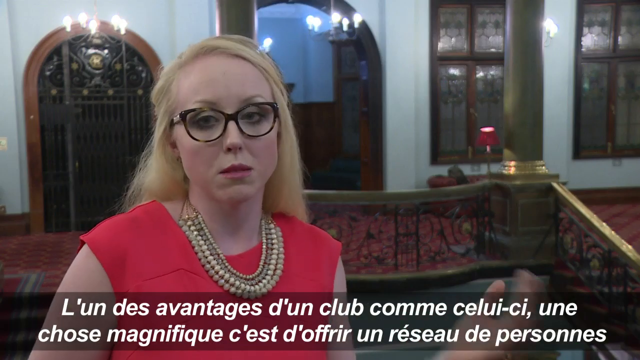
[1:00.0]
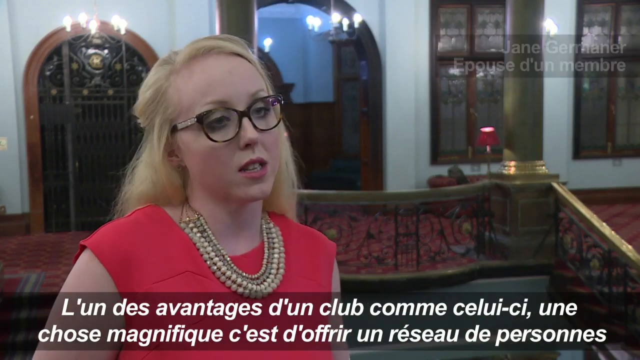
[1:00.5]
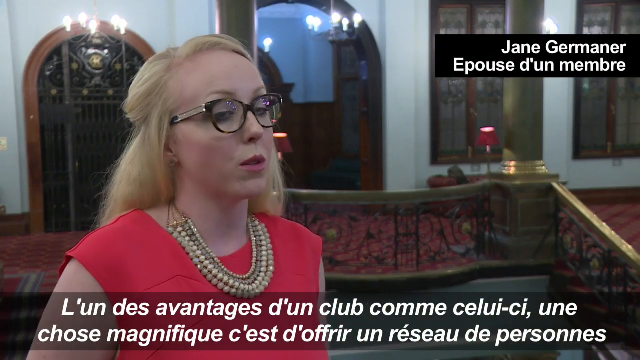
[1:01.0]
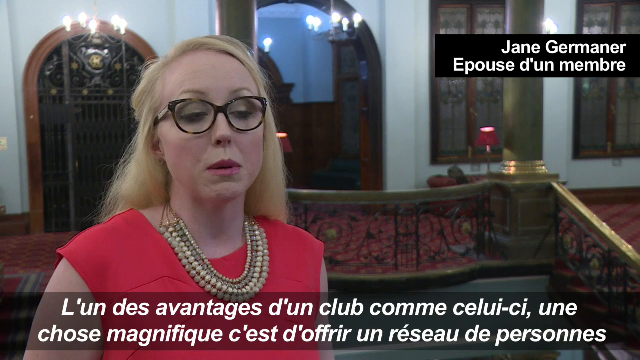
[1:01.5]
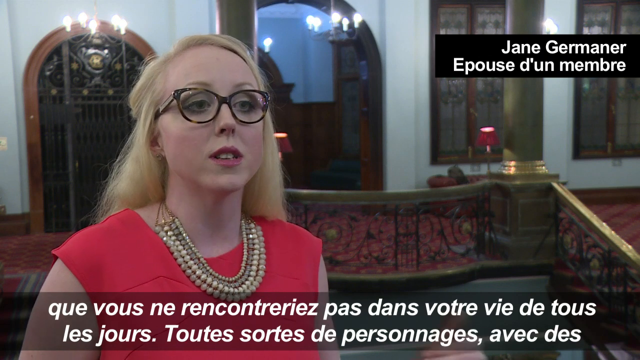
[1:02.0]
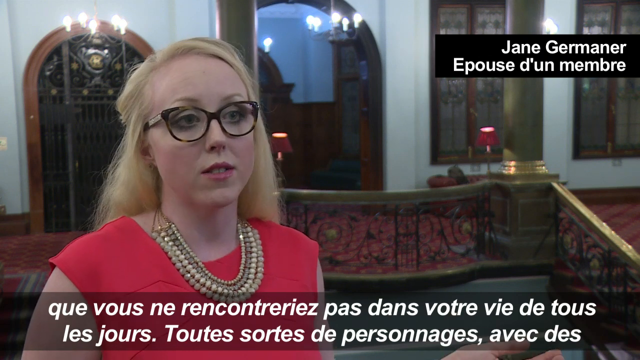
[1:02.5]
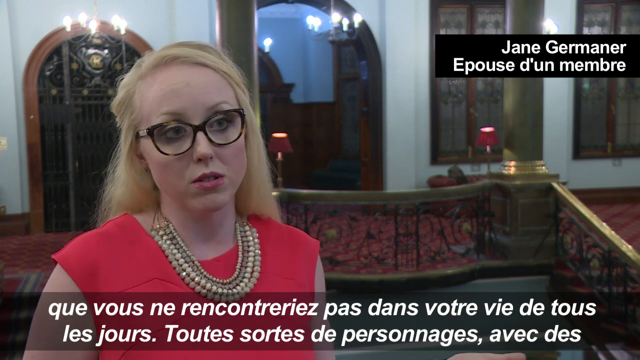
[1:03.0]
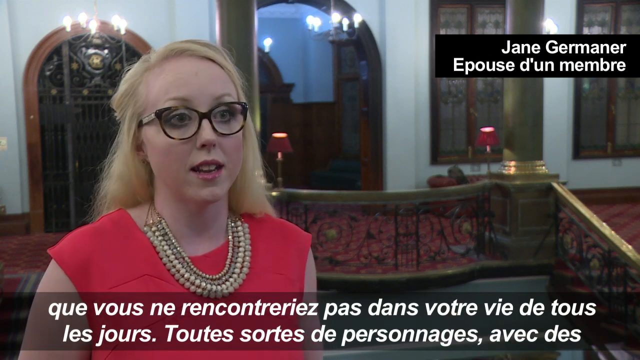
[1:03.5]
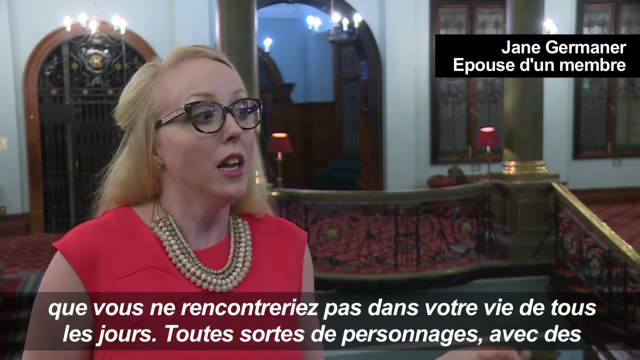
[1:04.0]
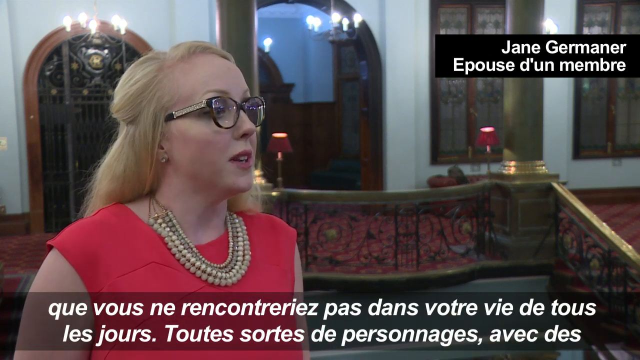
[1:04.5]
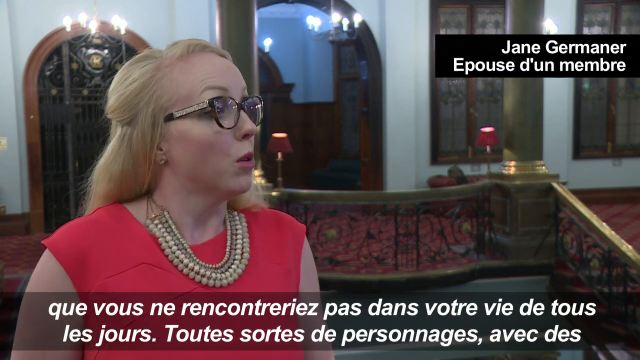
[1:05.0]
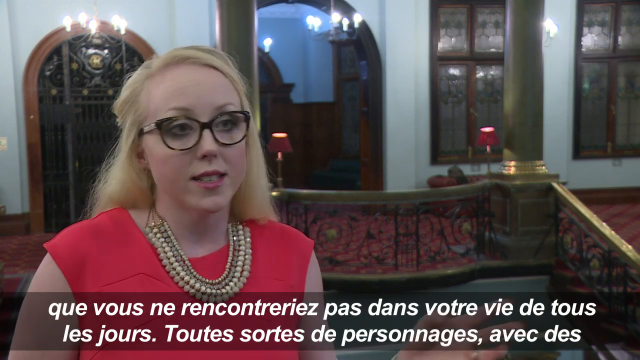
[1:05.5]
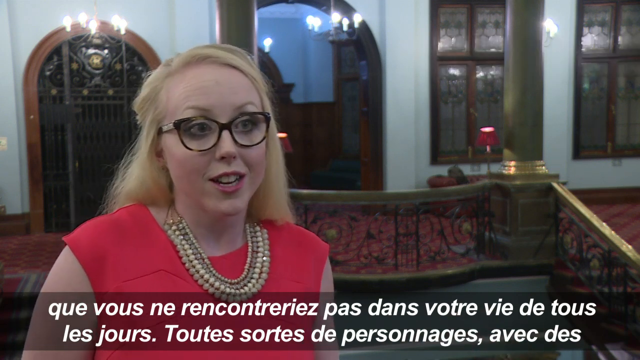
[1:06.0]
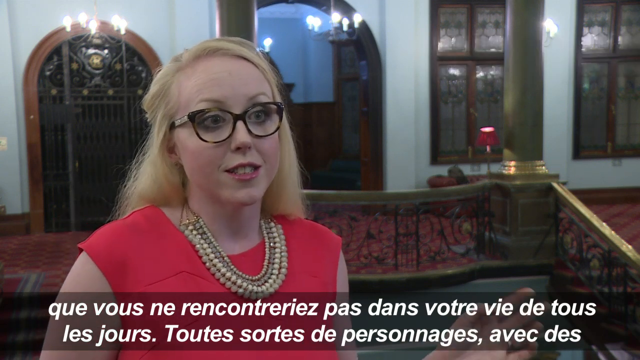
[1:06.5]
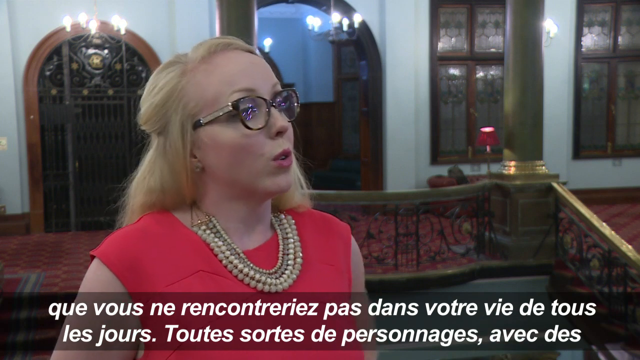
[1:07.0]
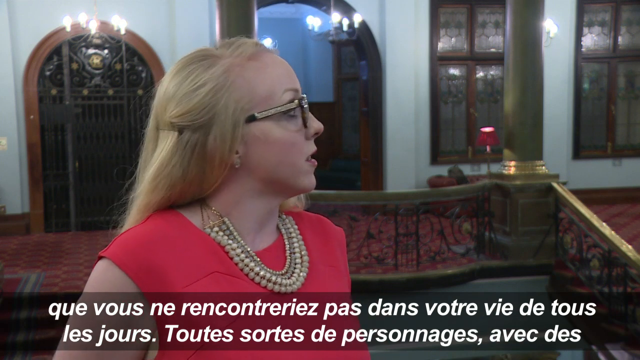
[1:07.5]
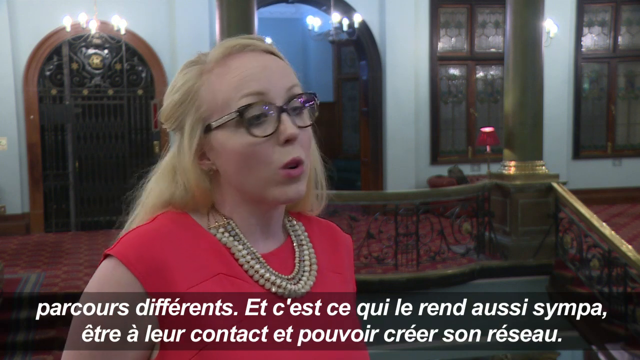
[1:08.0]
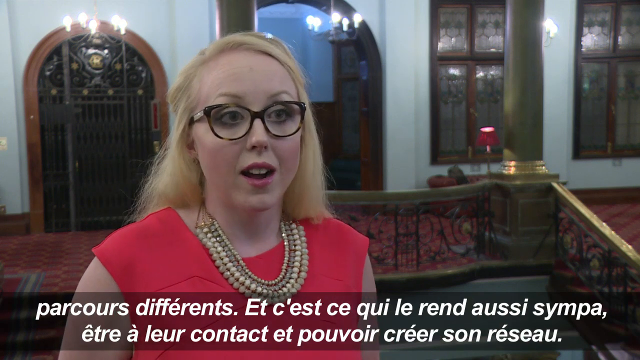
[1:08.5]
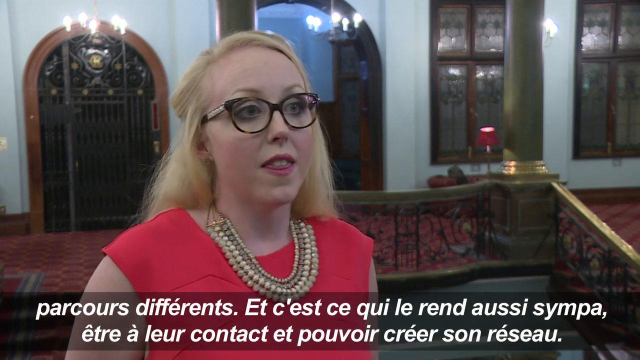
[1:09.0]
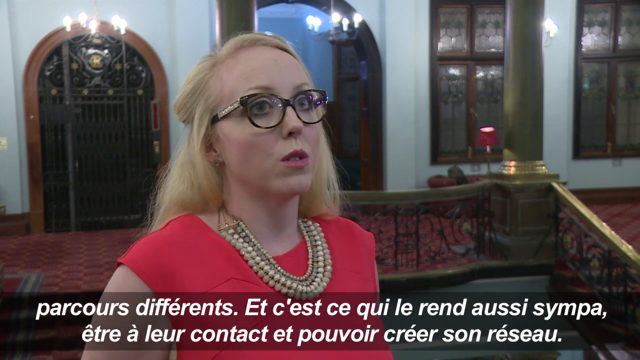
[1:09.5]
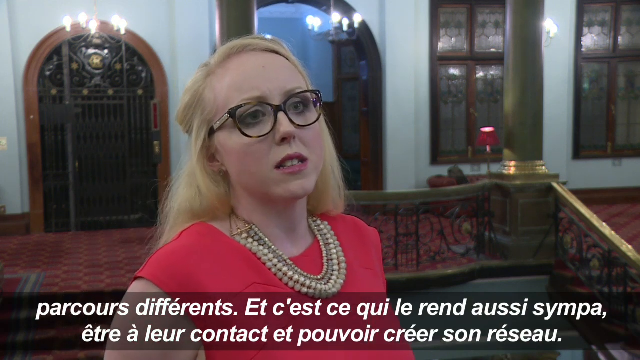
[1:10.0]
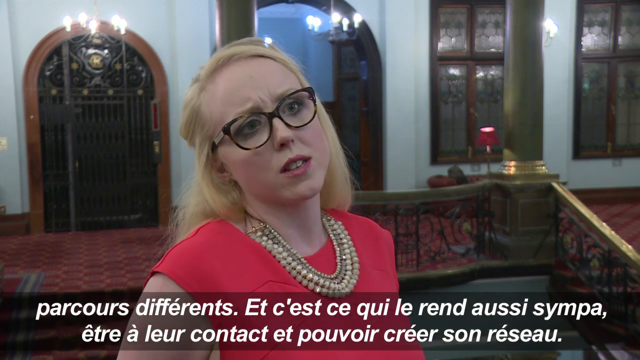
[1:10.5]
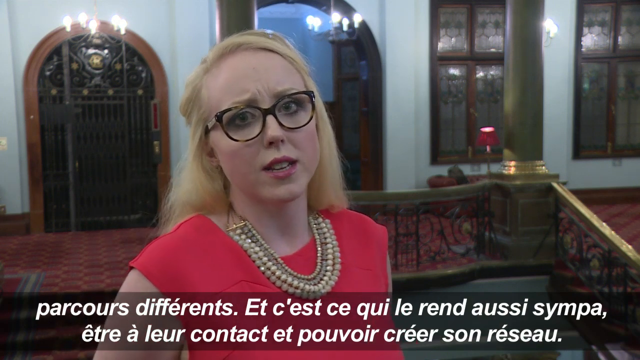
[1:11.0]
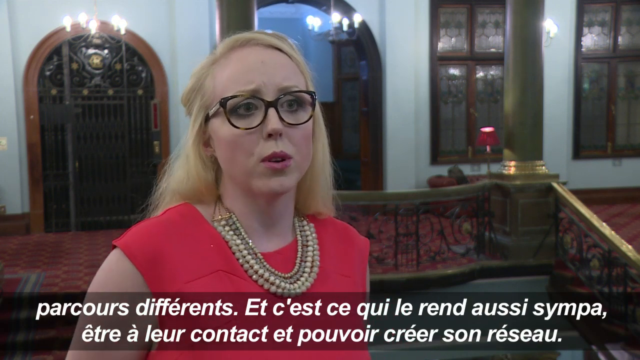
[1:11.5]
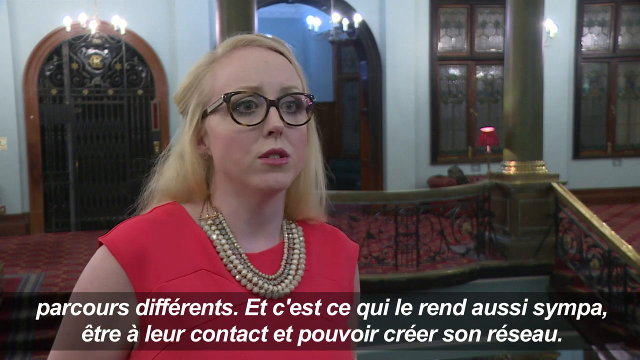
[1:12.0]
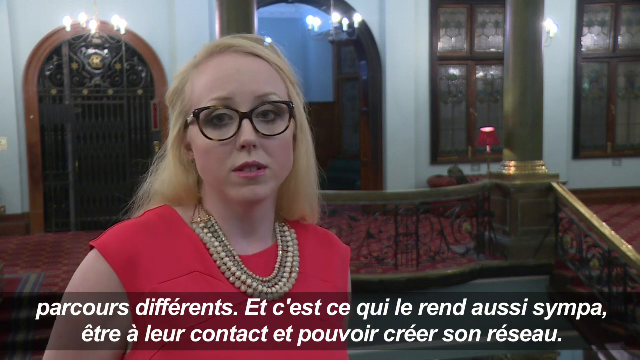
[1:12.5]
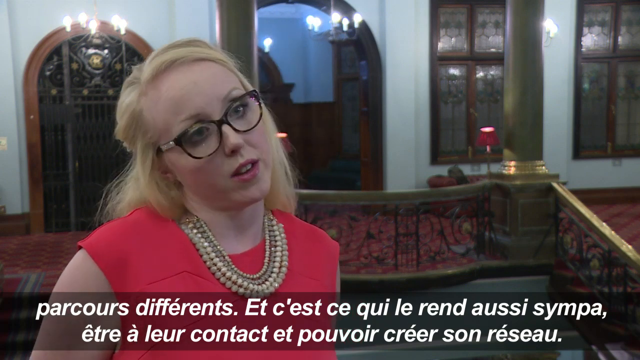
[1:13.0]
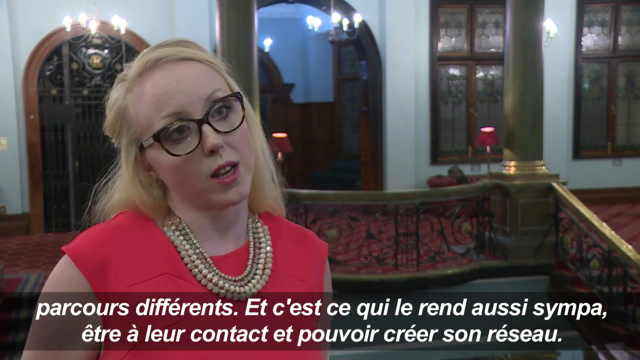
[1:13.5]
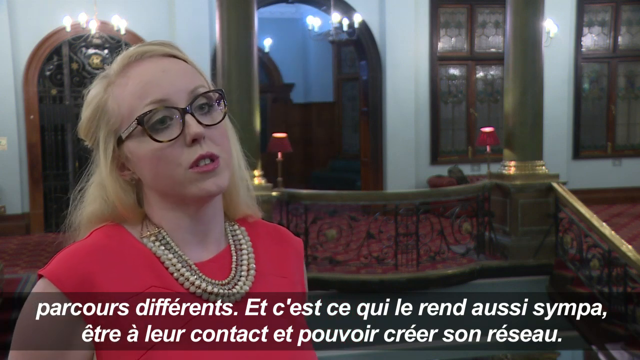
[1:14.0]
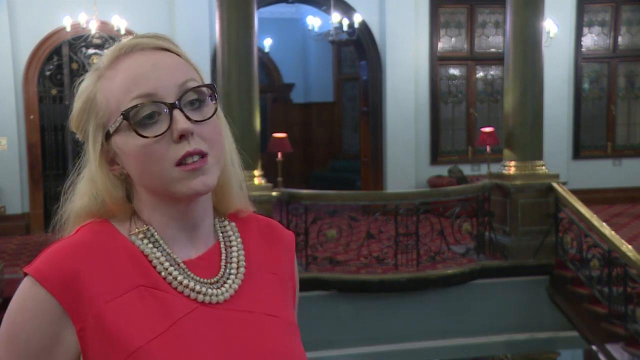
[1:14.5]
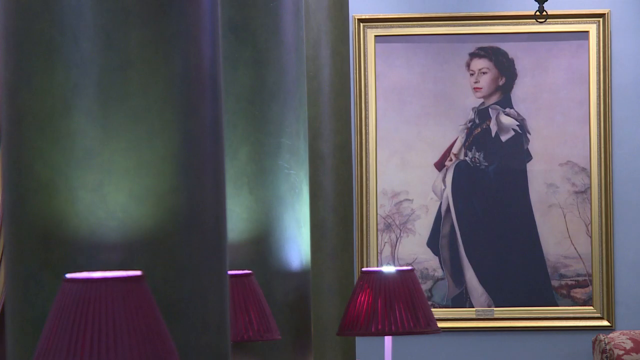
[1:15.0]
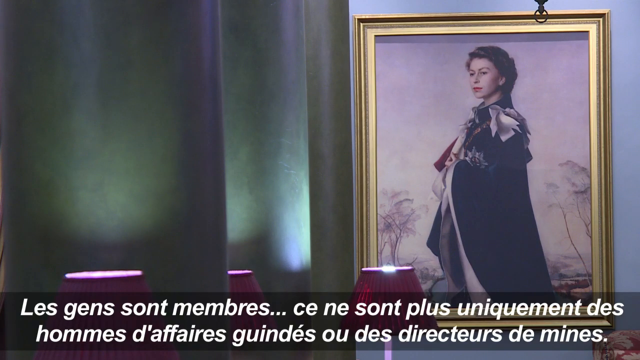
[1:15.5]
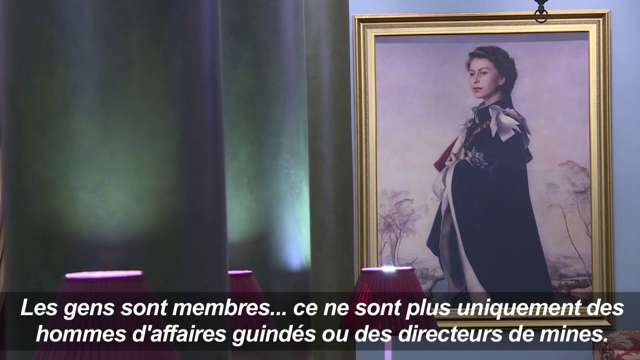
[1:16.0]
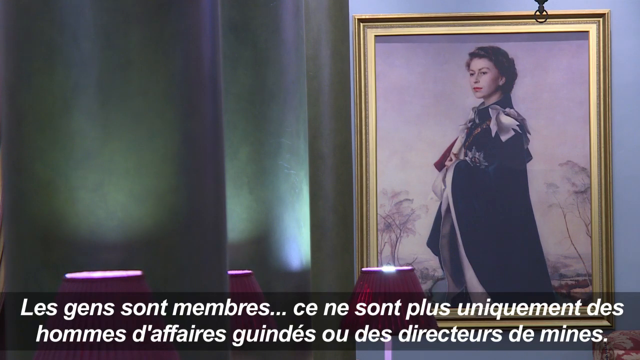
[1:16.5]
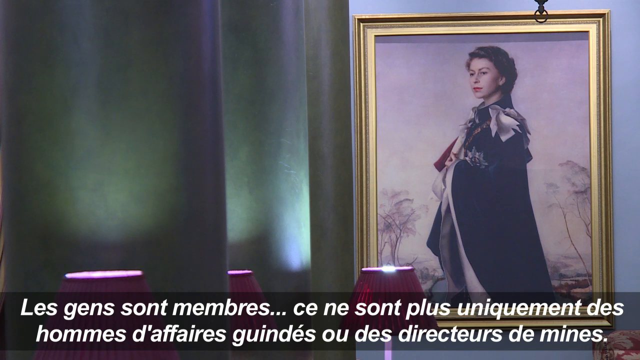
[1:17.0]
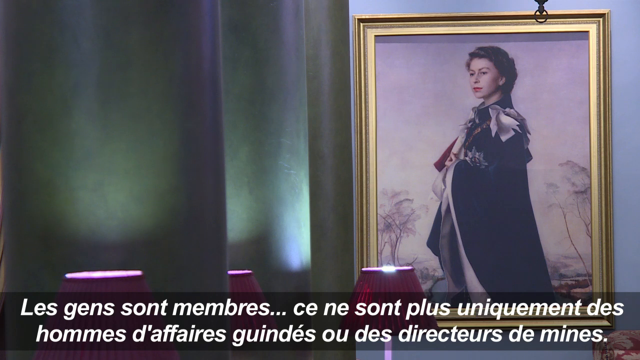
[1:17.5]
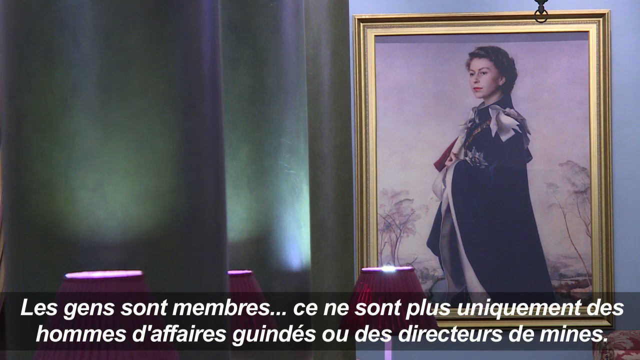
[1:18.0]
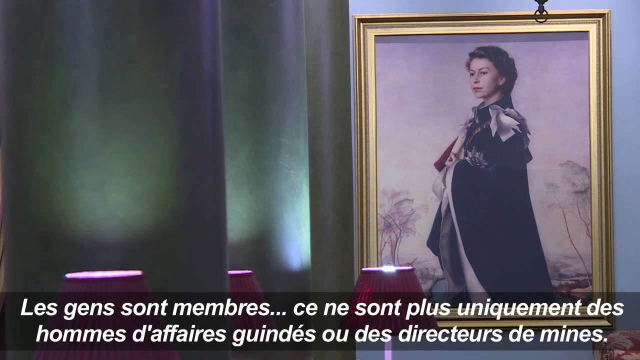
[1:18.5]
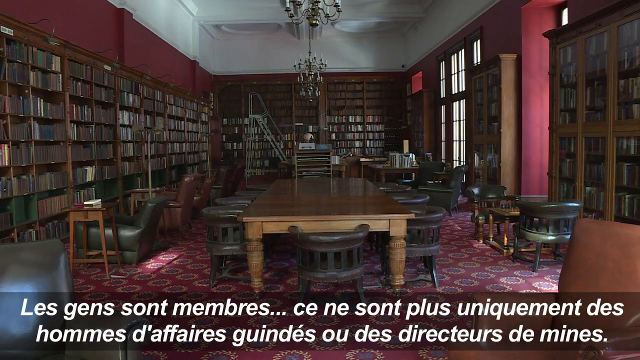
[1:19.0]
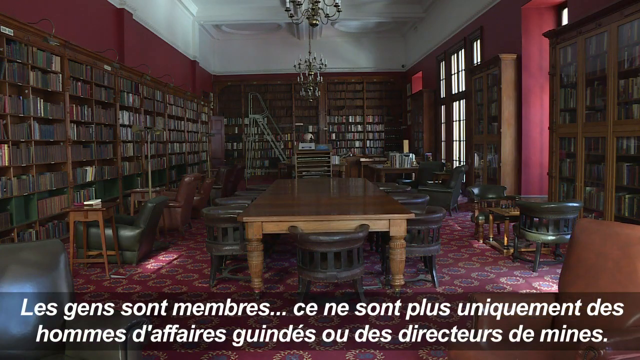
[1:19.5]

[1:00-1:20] The woman in the red dress, with a big necklace and glasses, speaks to someone off camera. Her name is Jane Germainier-Ebosa Dunmumbra, and there is a subtitle in a foreign language at the bottom. She looks off to her left and back toward the camera, not really looking directly at it, her eyes moving here and there as she moves her head to the right and to the left. Next is a painting of a white woman in a gold frame; the woman has her hair kind of pulled back and wears some sort of royal-looking robe. Below the painting are some lights with little purple lampshades. The woman is standing in what looks like the same foyer with the grand staircases as she talks to someone. Then the library is shown in full view: books line the entire left wall and the back wall, there are three cases of books on the right wall, and a large table is in the center of the room. A chandelier hangs from the ceiling, and there are windows on the right side of the library. Foreign subtitles are at the bottom of the screen.